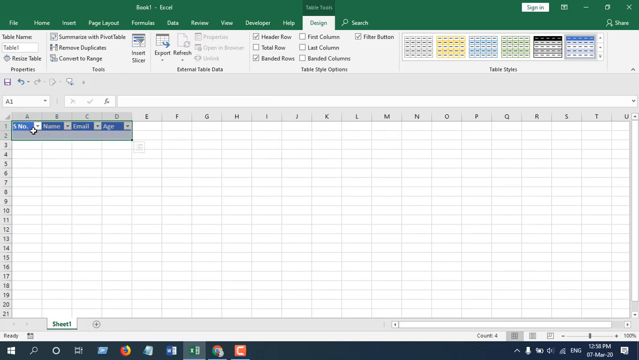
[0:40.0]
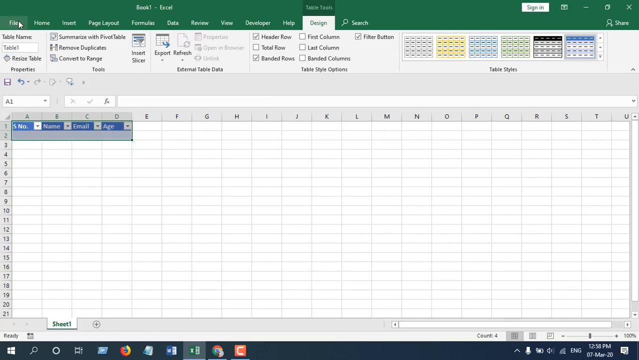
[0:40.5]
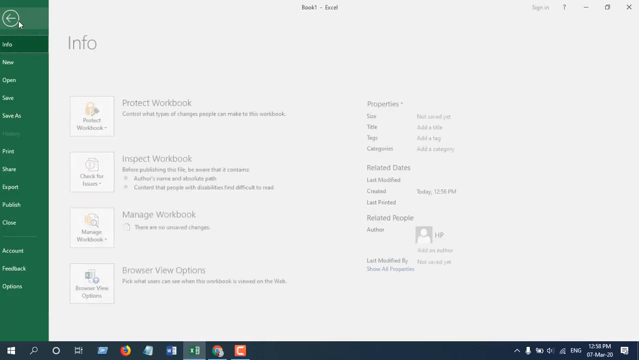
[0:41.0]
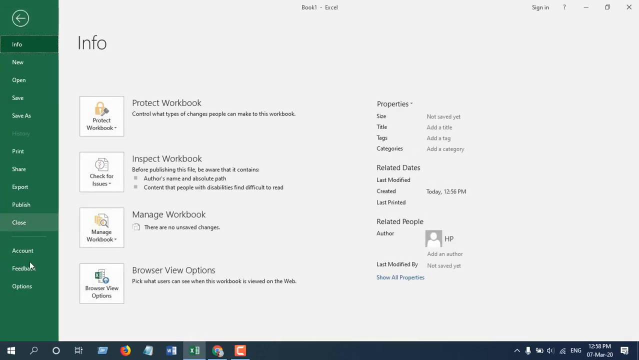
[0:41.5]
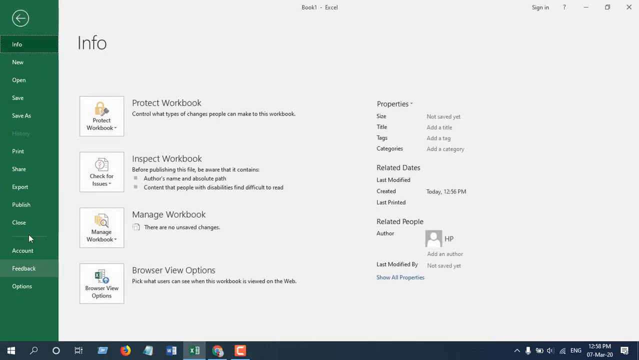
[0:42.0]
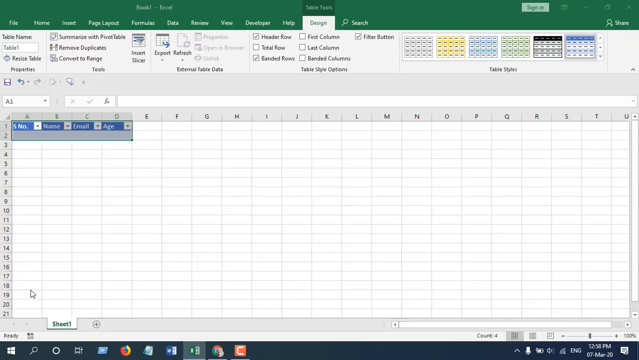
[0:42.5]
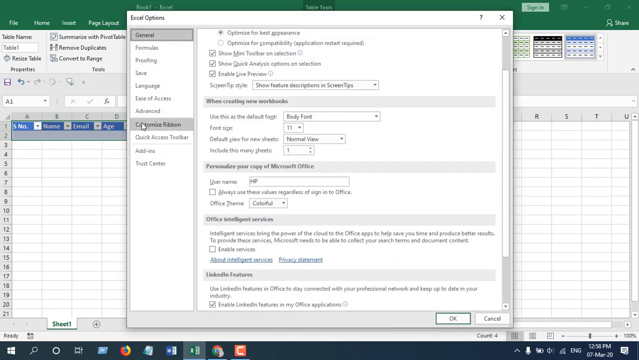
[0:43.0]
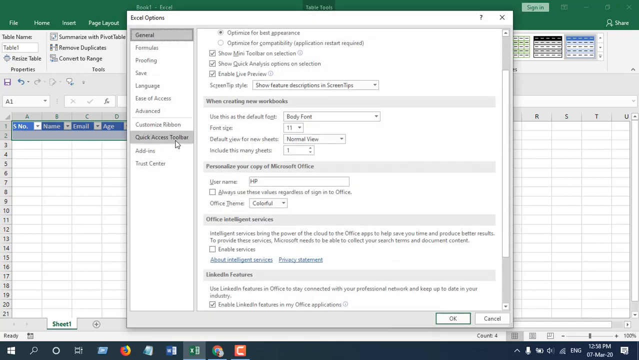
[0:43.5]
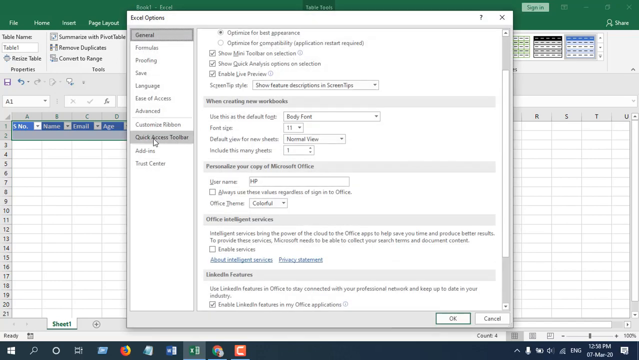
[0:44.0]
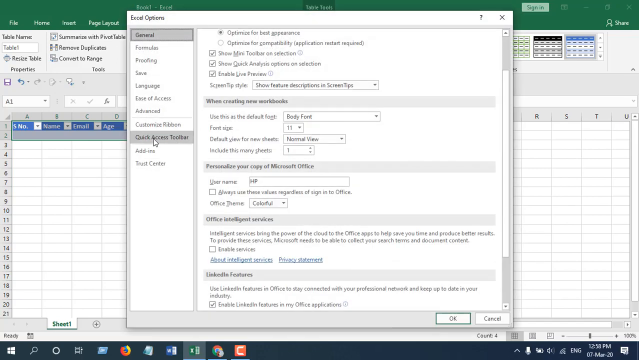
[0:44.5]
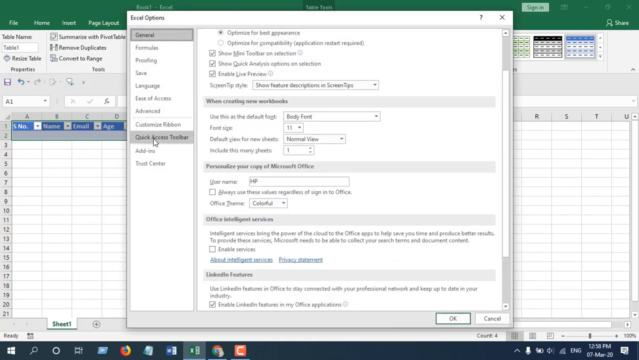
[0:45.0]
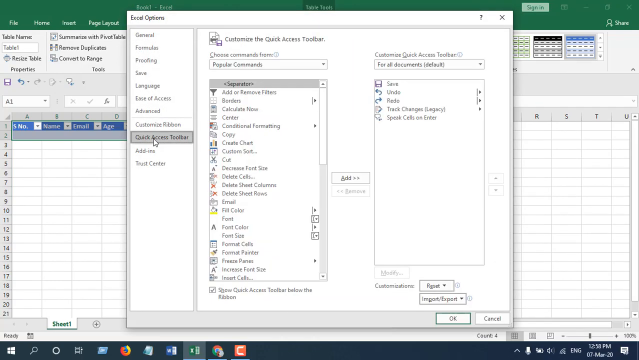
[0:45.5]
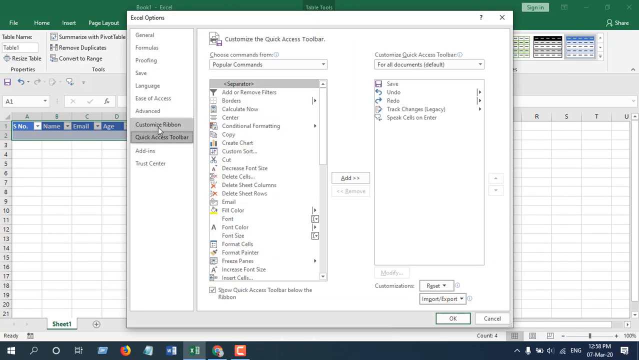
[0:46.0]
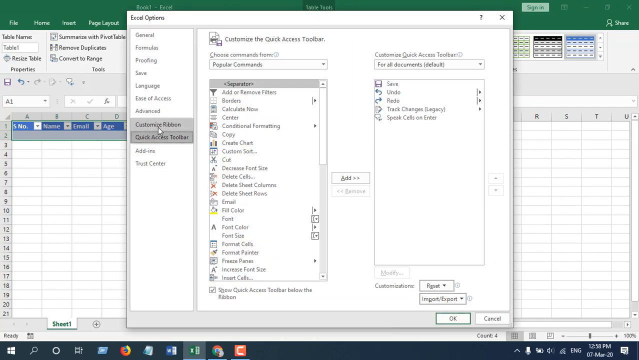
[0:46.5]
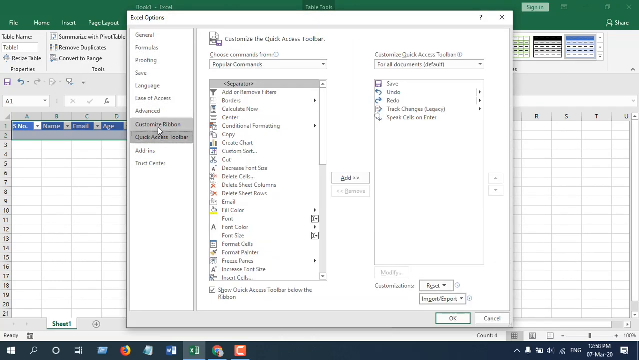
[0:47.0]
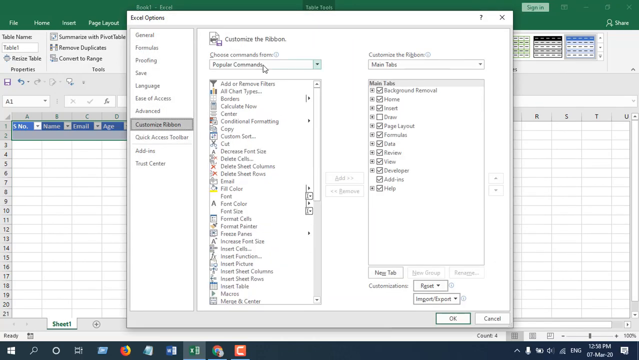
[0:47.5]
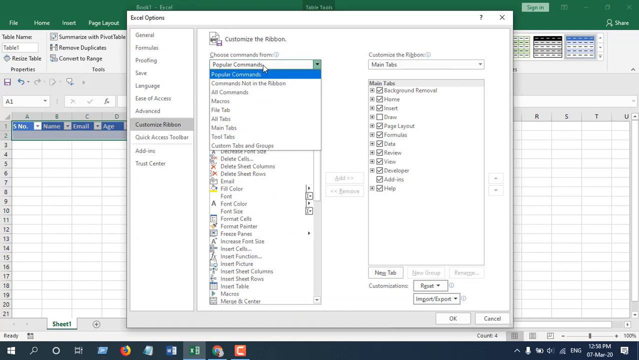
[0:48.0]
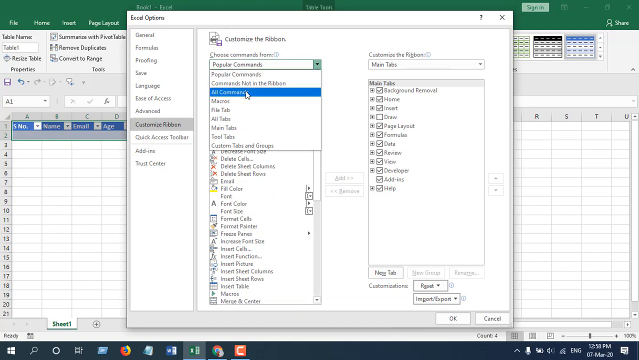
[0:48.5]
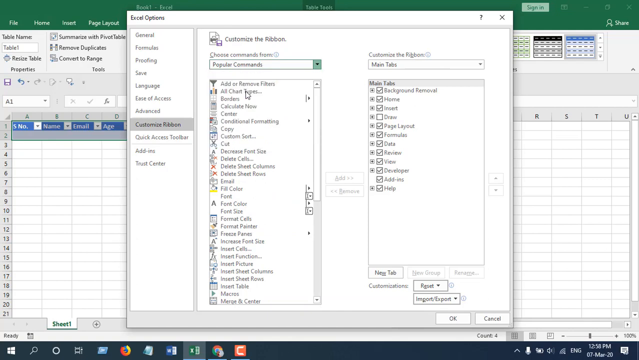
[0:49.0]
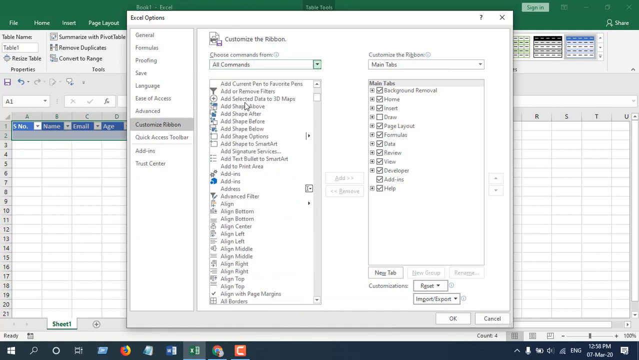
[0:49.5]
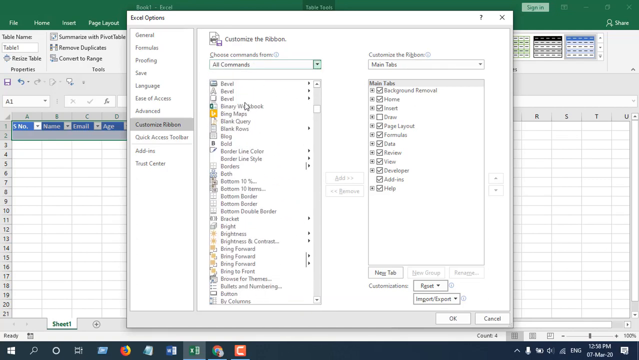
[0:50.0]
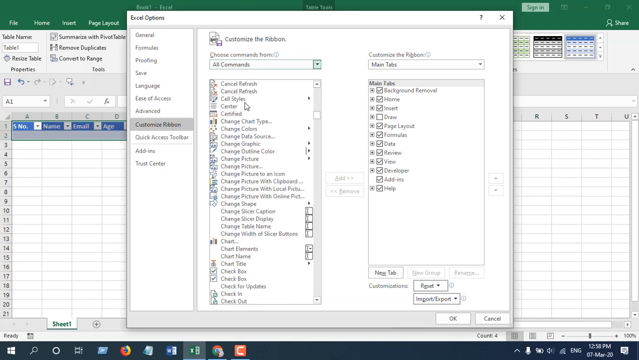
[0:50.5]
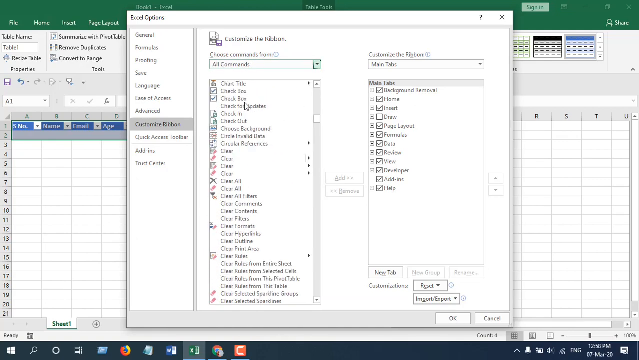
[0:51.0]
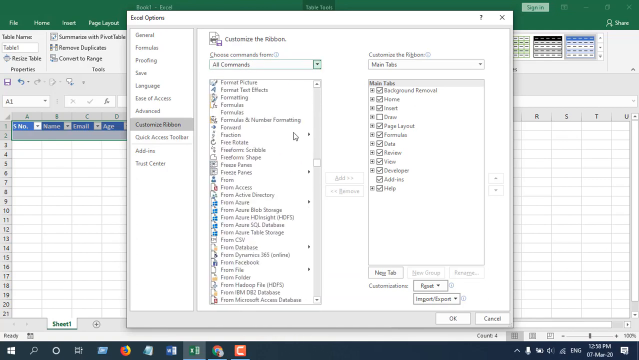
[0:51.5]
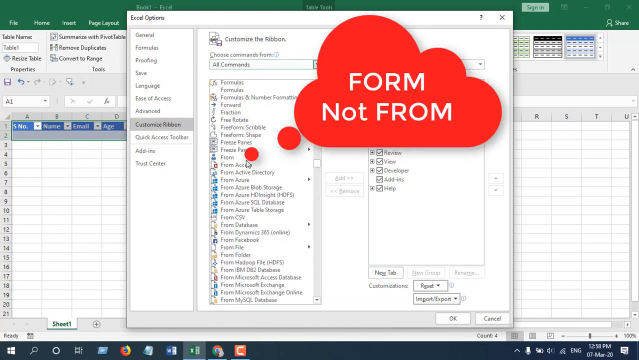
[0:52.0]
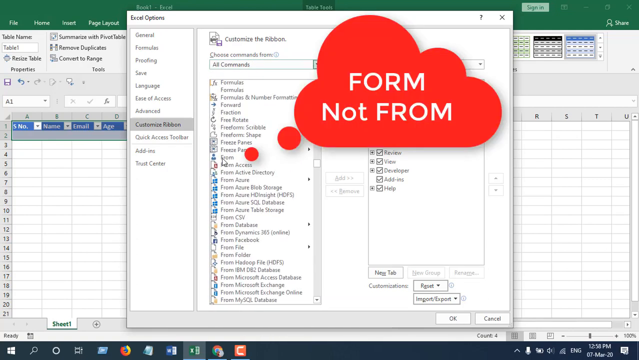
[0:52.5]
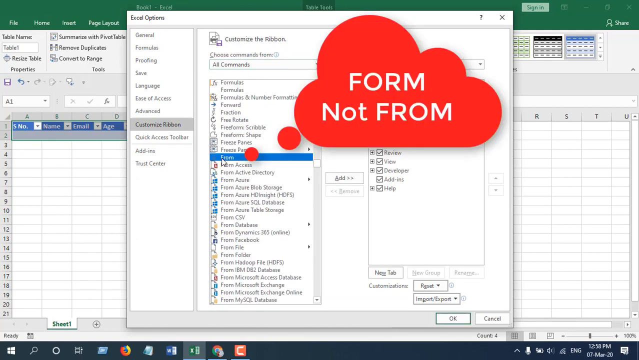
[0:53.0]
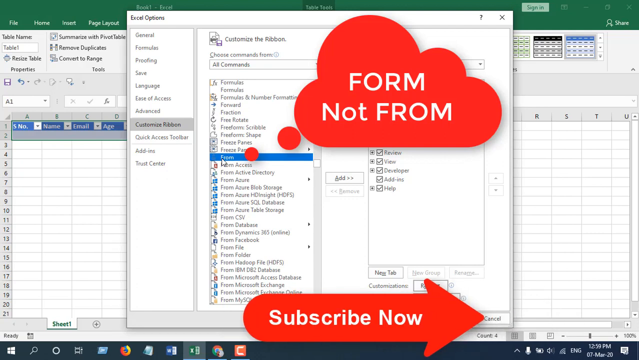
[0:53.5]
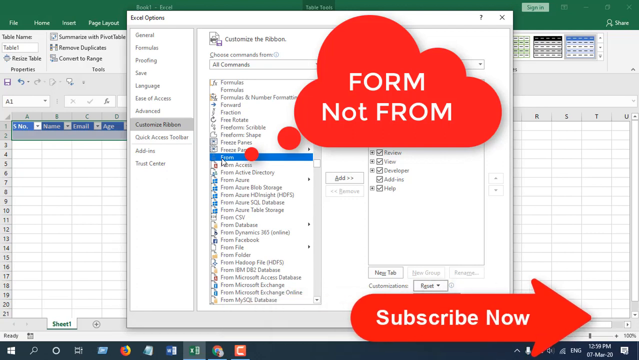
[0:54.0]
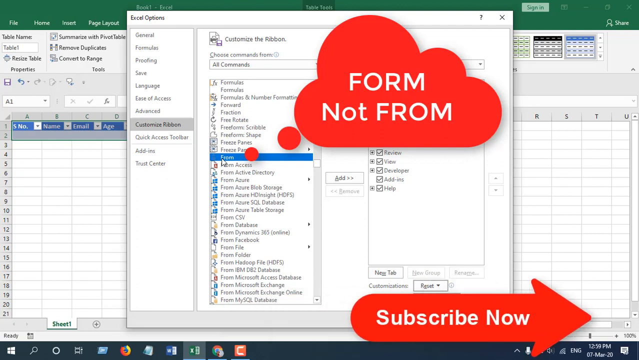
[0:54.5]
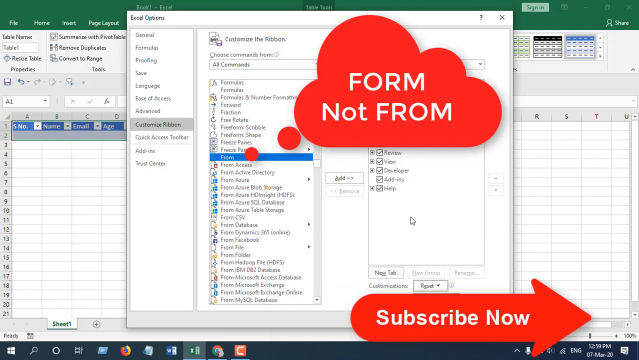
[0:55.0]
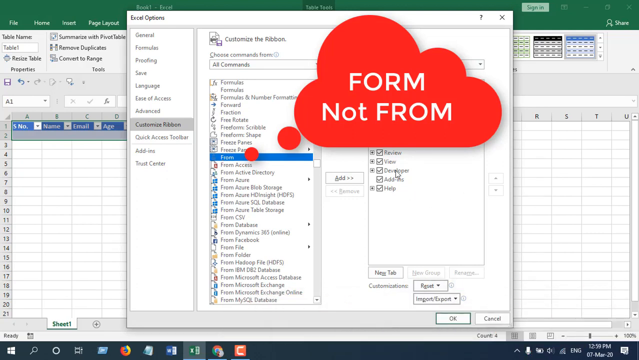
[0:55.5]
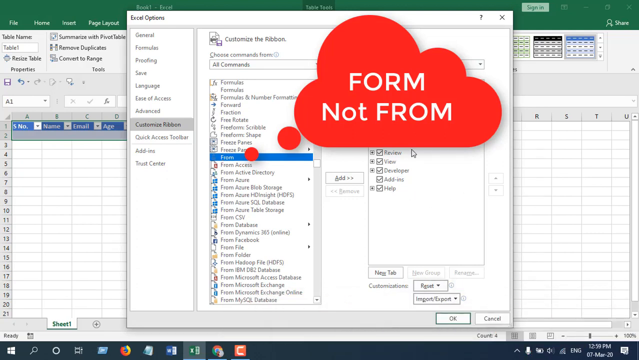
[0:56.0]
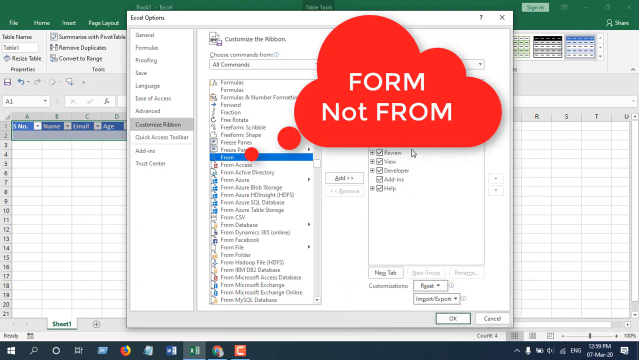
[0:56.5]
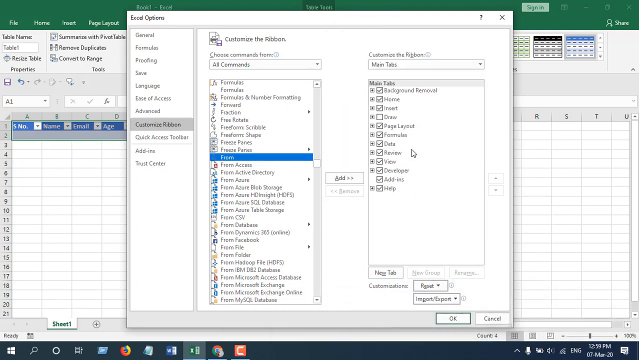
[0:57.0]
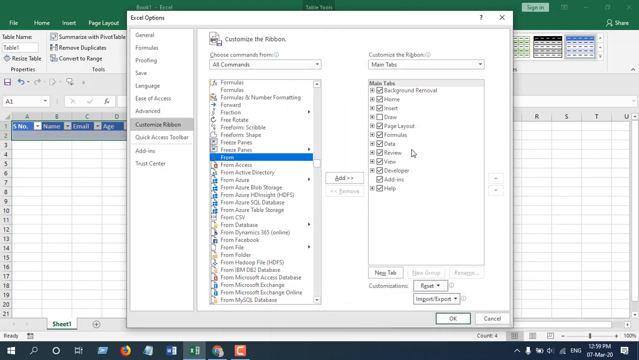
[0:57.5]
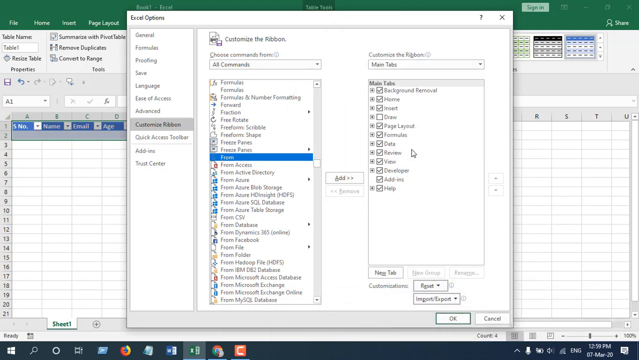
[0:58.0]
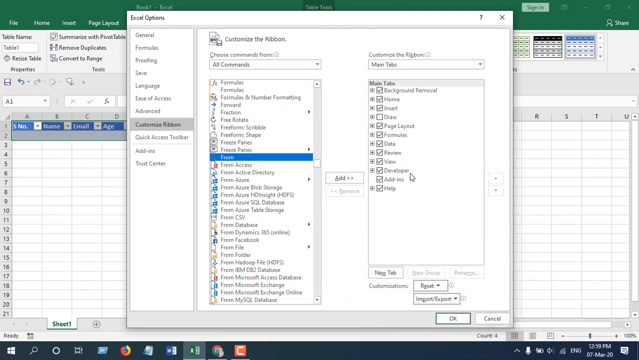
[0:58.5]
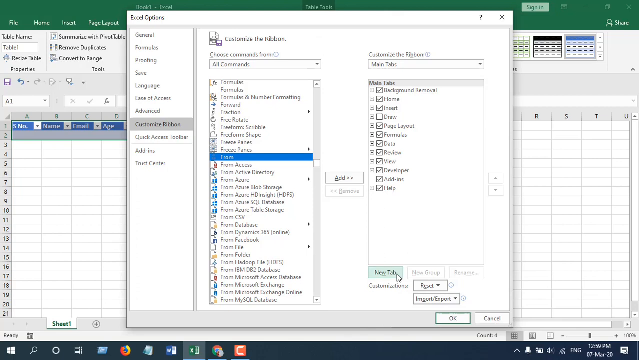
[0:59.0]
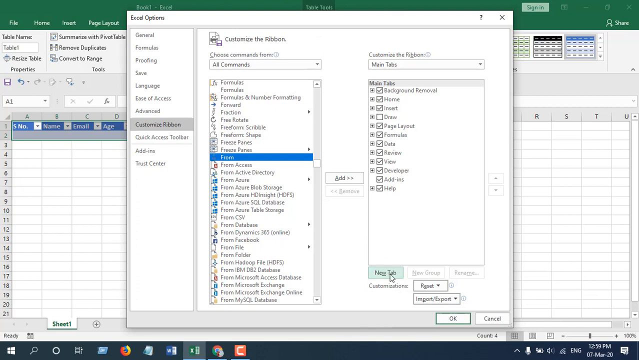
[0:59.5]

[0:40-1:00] The user appears to be navigating through the various options in Microsoft Excel.